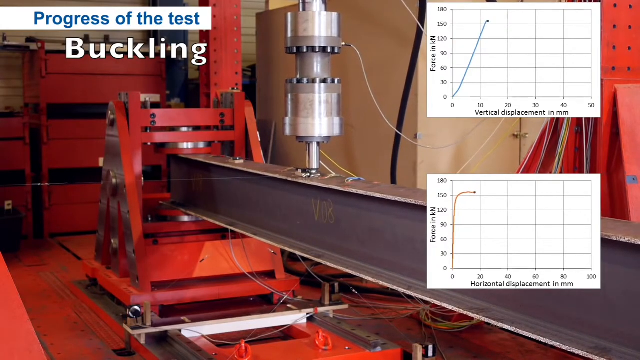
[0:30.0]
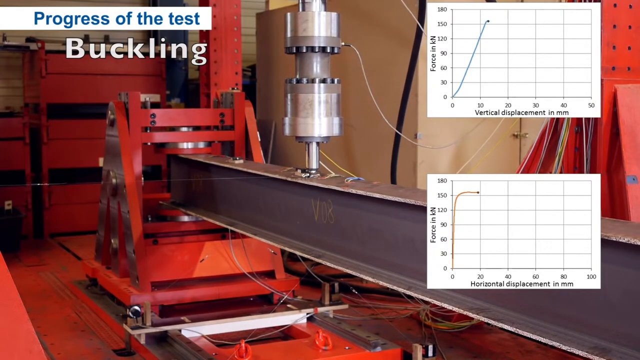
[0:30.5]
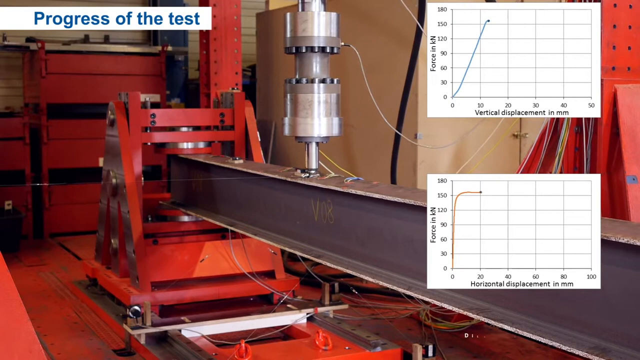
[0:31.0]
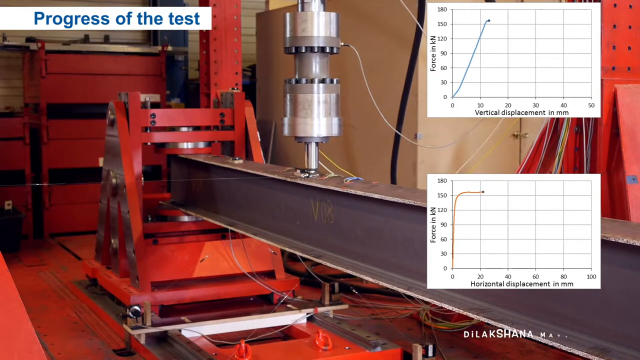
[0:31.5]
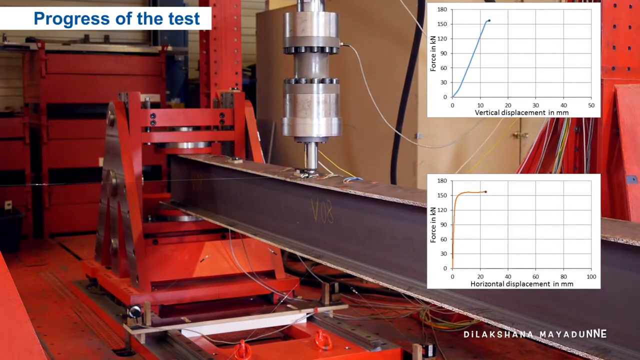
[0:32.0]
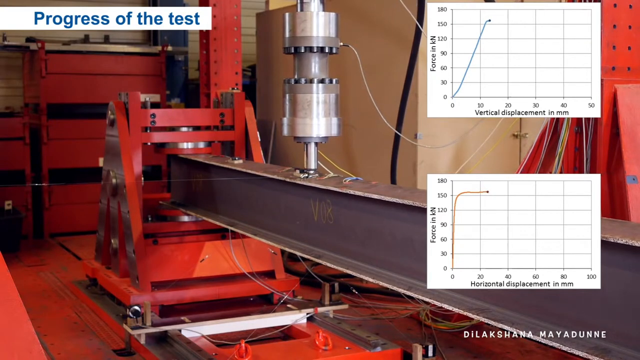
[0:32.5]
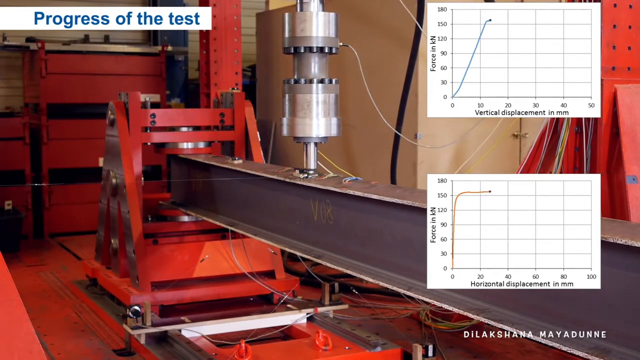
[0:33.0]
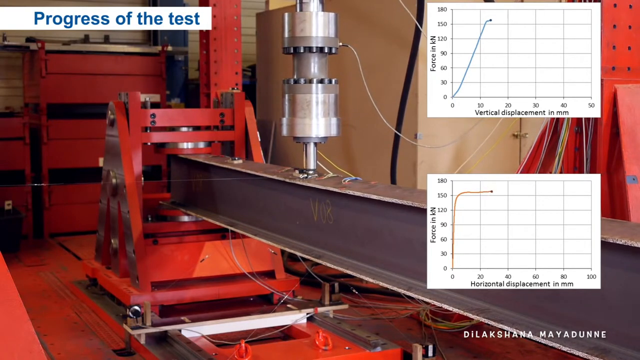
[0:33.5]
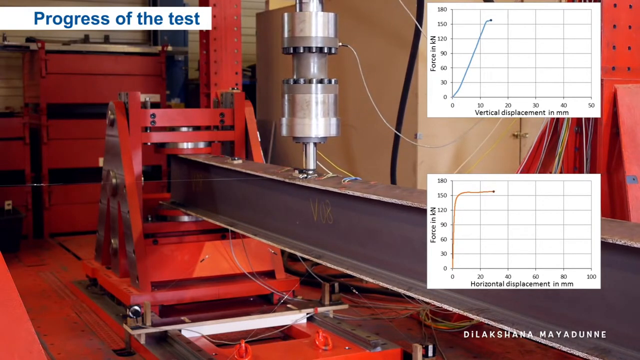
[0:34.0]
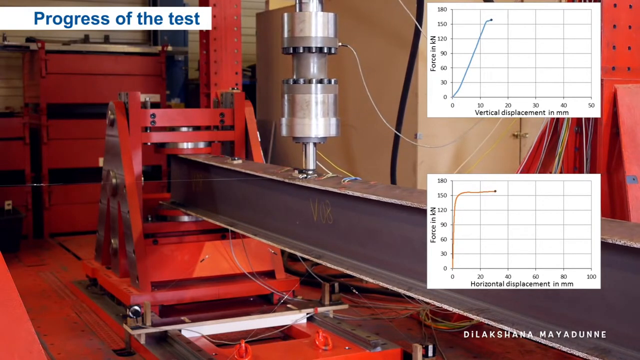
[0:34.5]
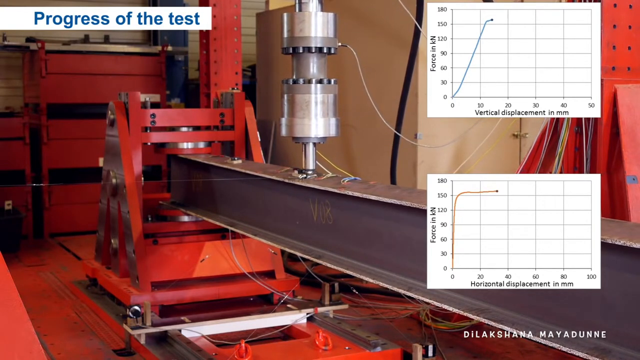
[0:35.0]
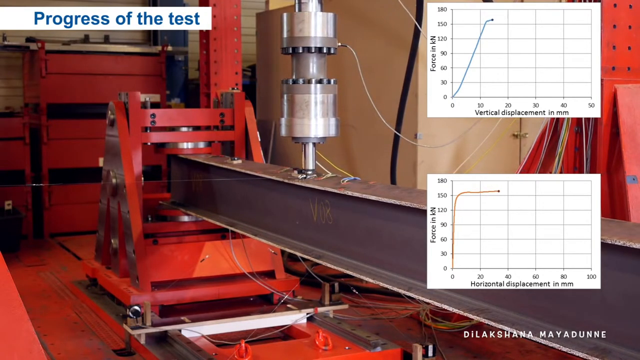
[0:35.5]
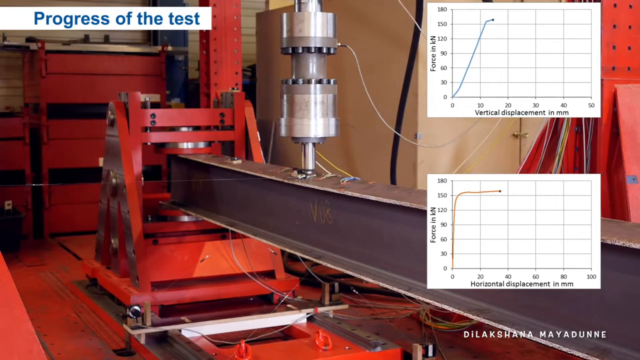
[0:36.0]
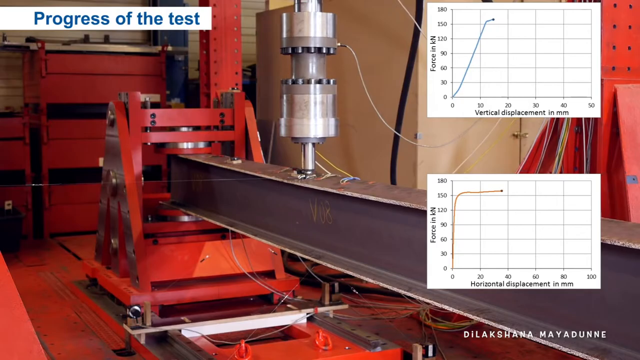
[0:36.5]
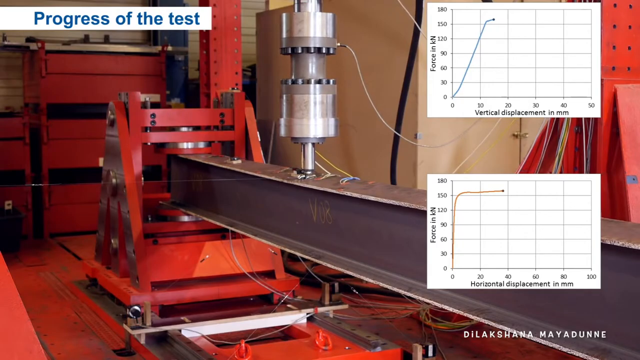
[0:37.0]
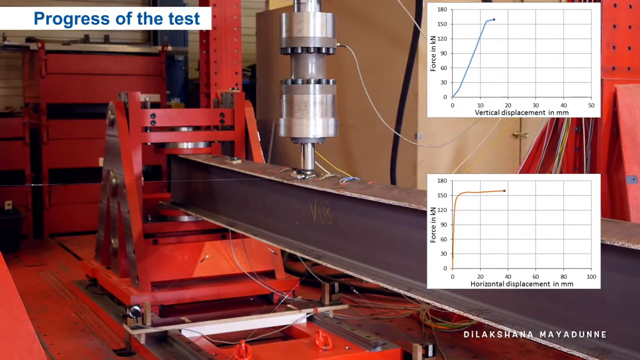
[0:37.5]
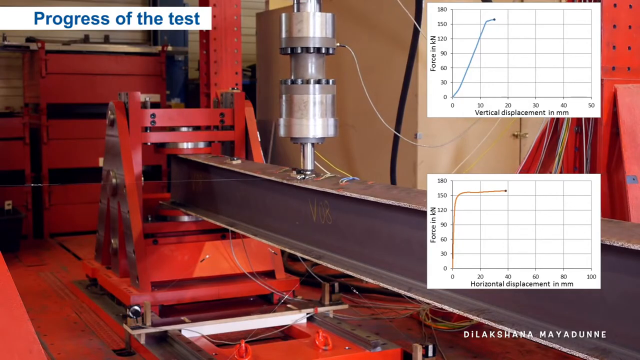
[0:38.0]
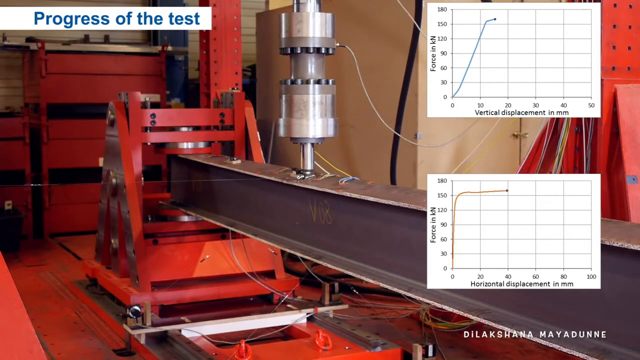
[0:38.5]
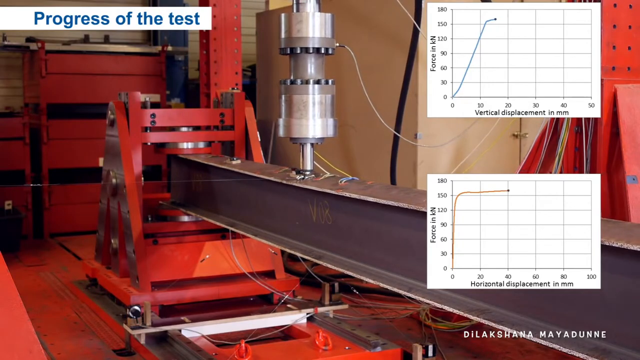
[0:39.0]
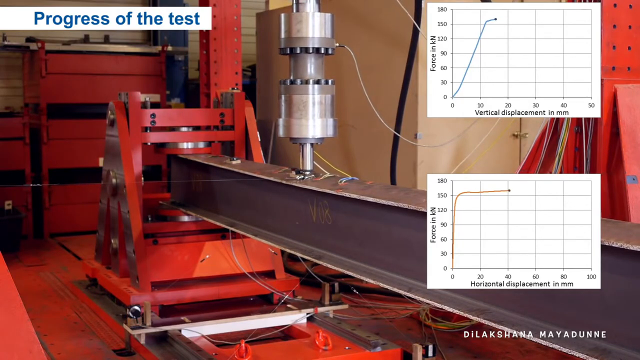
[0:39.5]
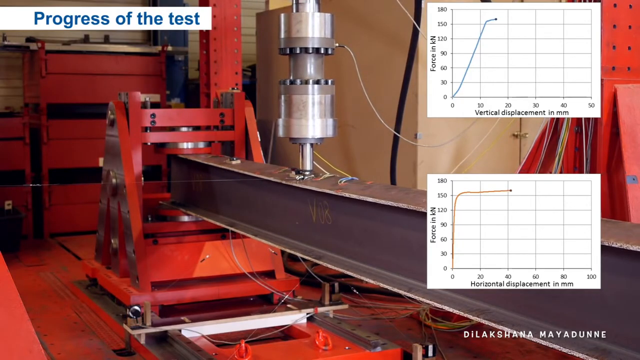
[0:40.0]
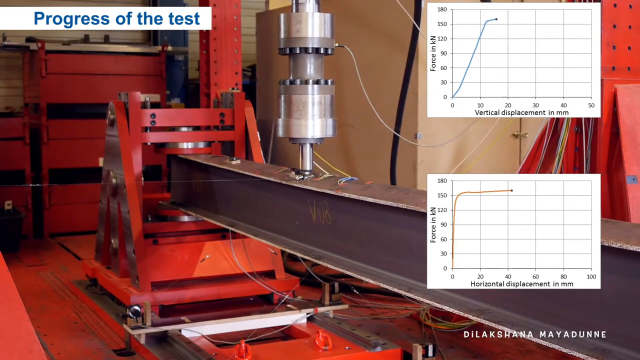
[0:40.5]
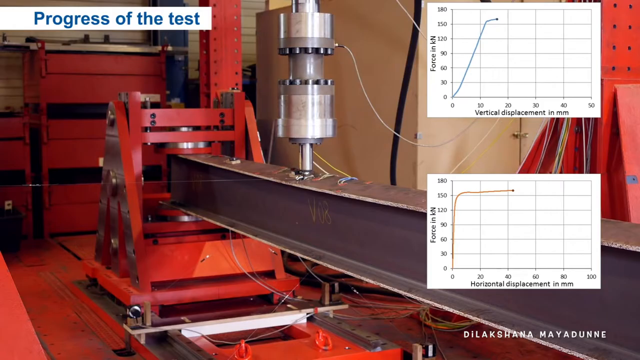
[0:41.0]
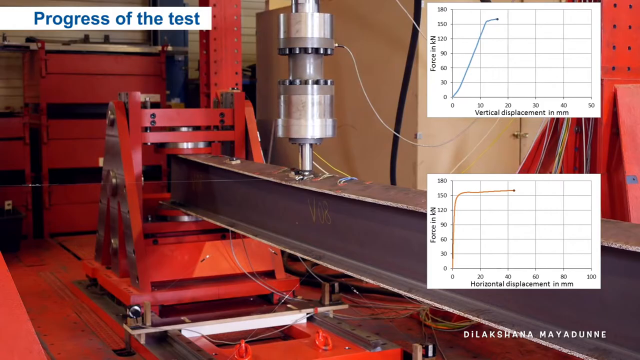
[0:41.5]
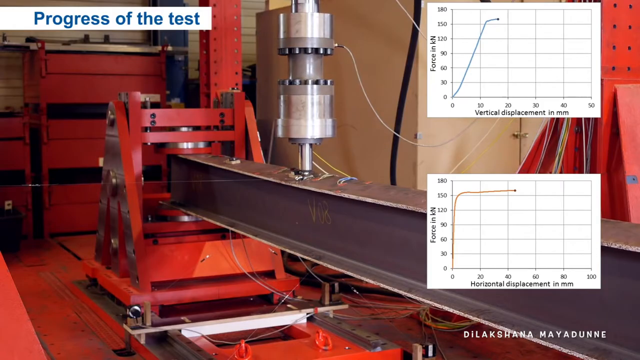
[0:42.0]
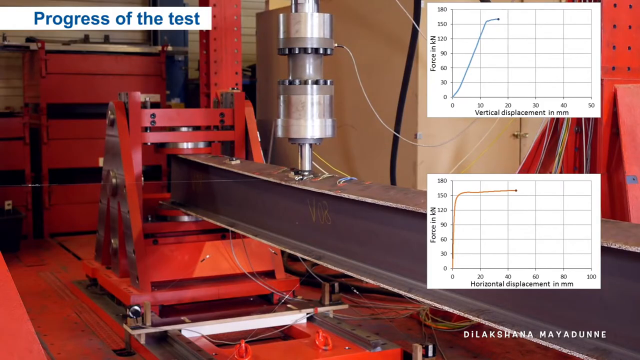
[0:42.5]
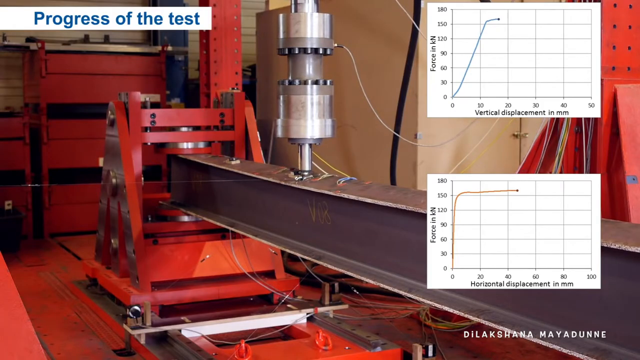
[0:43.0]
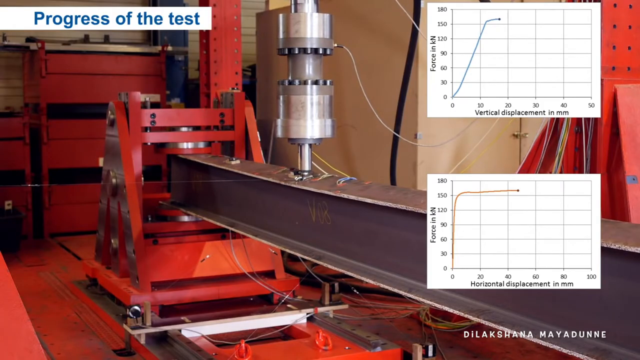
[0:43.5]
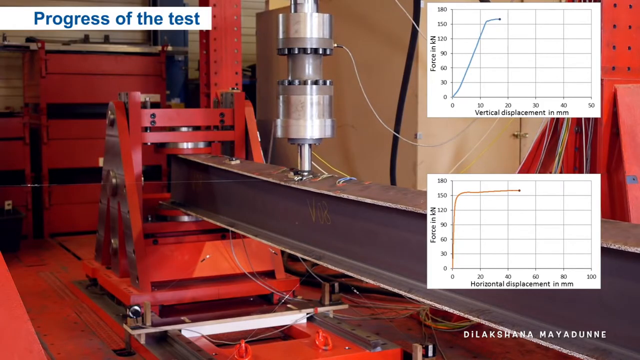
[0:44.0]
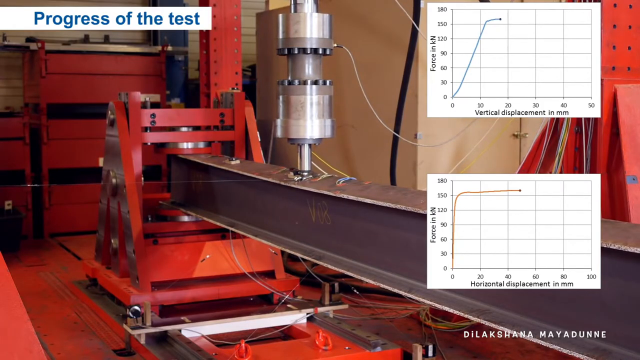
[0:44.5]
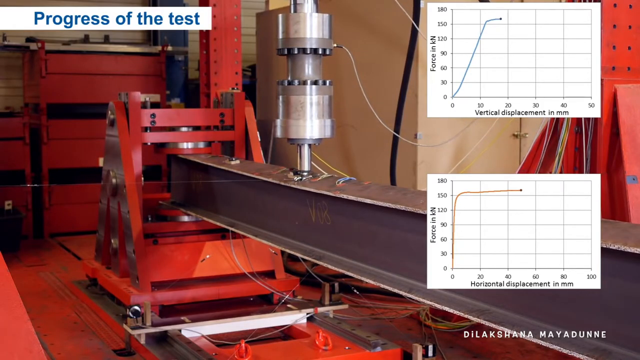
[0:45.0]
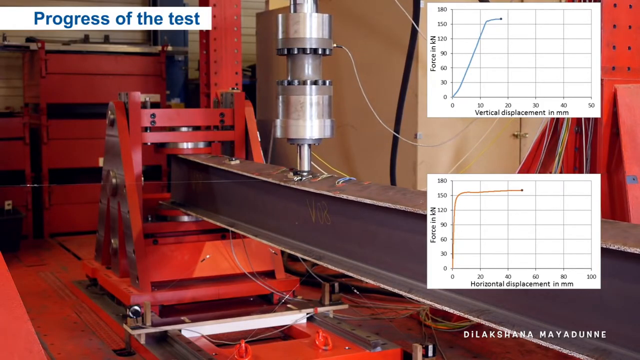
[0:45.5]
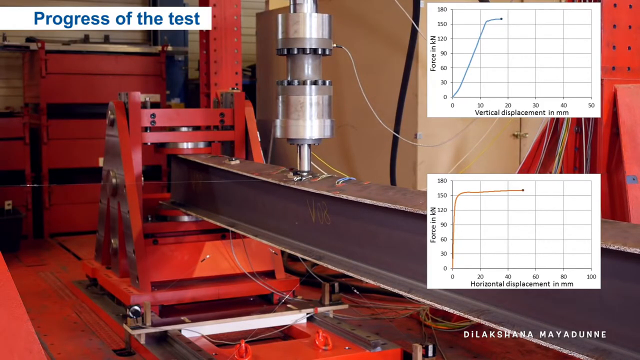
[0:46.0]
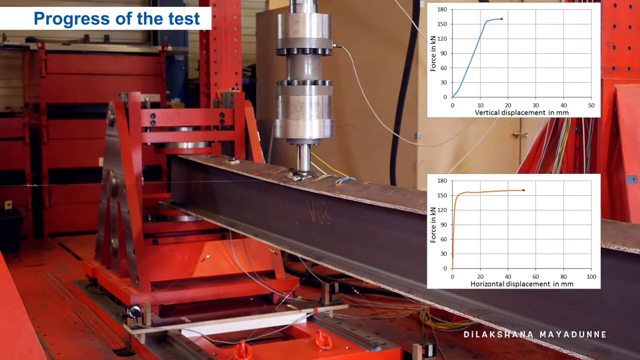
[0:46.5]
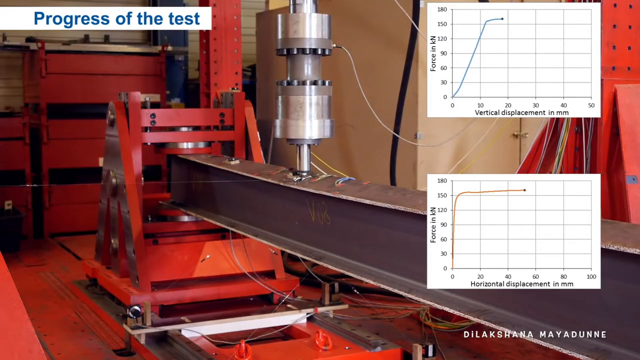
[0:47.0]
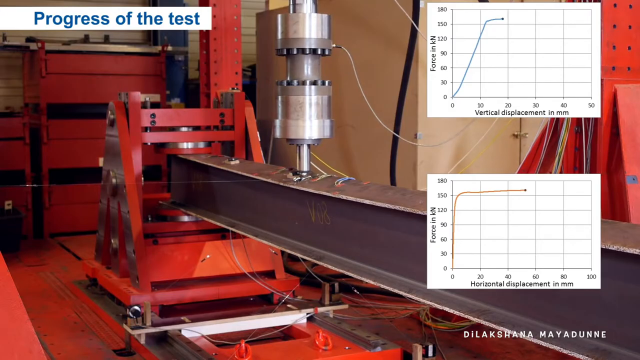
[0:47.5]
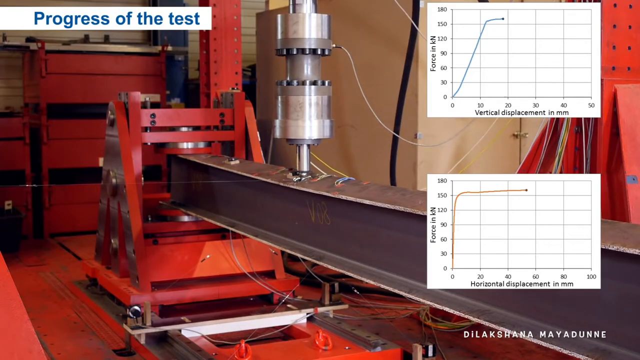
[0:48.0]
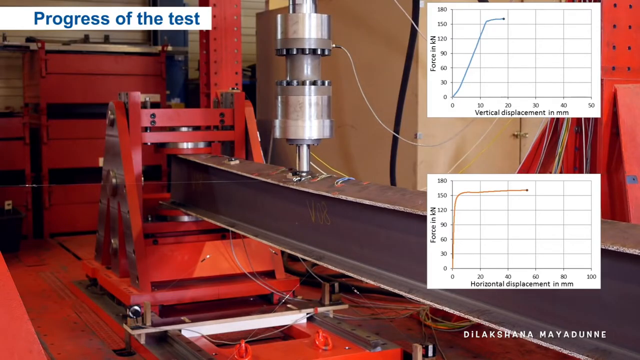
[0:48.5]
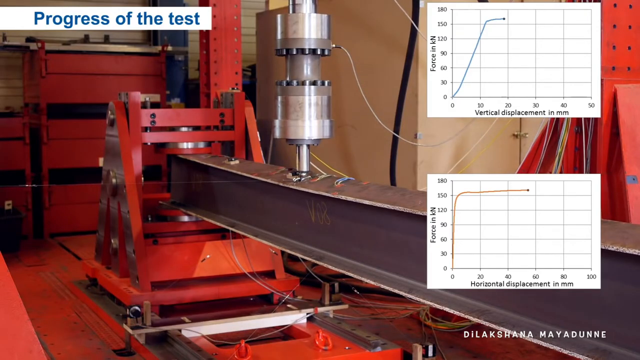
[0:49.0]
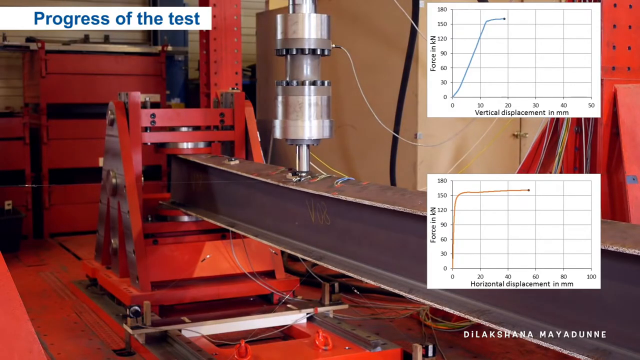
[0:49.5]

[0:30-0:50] Several graphs on the screen show the activity of the machinery, with force on the vertical axis and horizontal displacement on the x-axis. One main machine has a cylindrical object in its center and a strip in the middle. A variety of objects are arranged around the scene in an organized fashion, and there is a white wall in the background. The light is dim, with shadows.